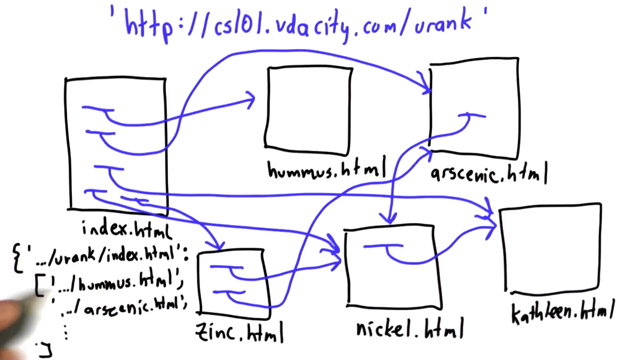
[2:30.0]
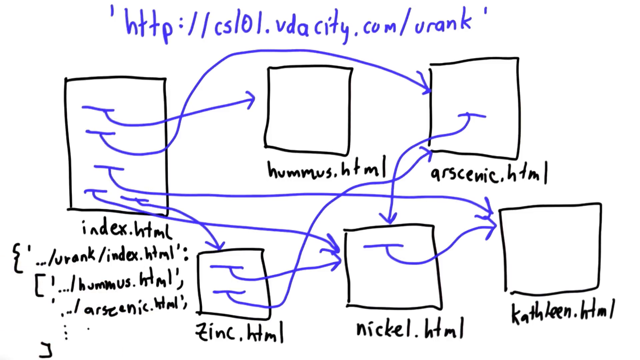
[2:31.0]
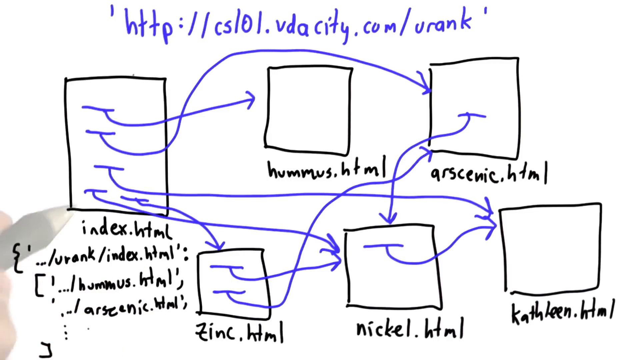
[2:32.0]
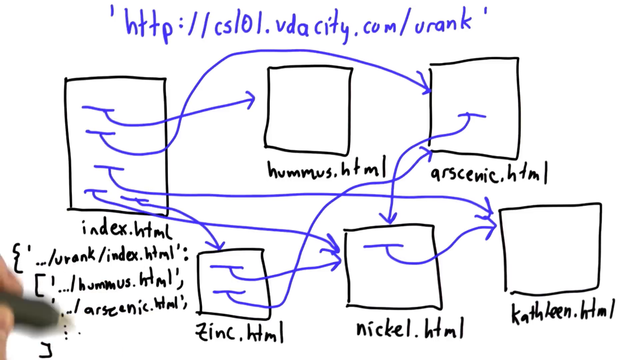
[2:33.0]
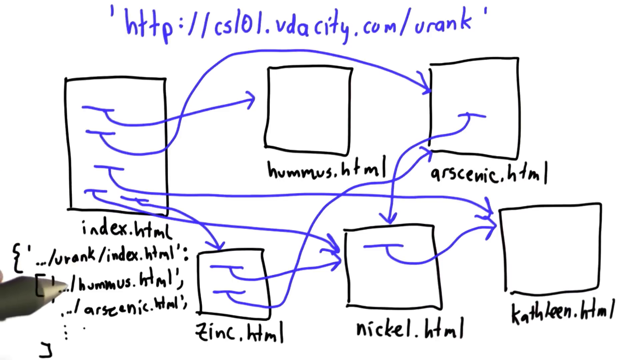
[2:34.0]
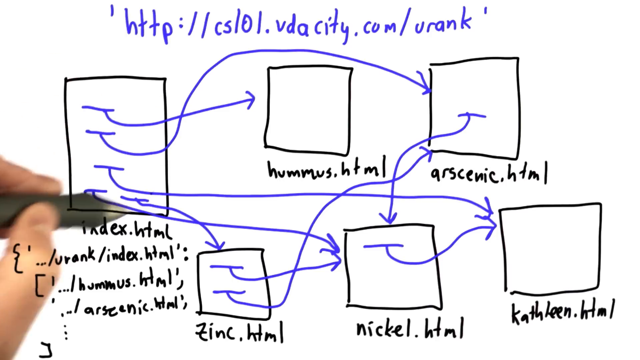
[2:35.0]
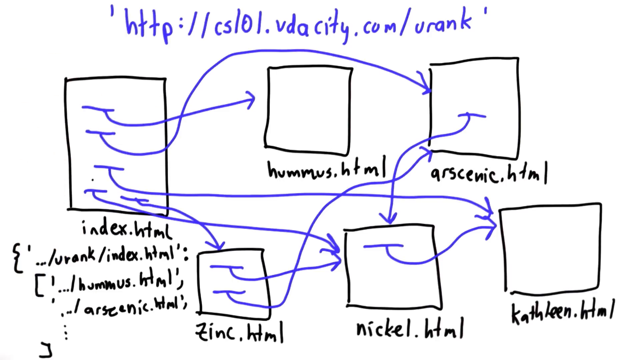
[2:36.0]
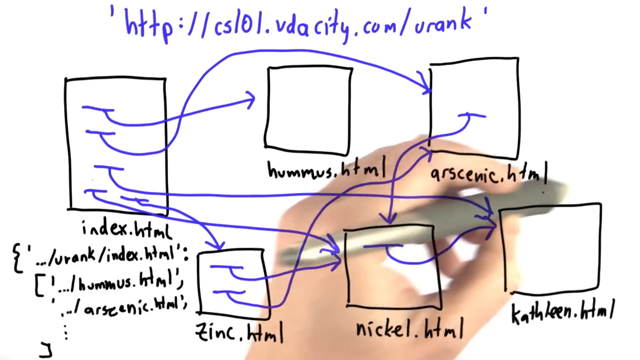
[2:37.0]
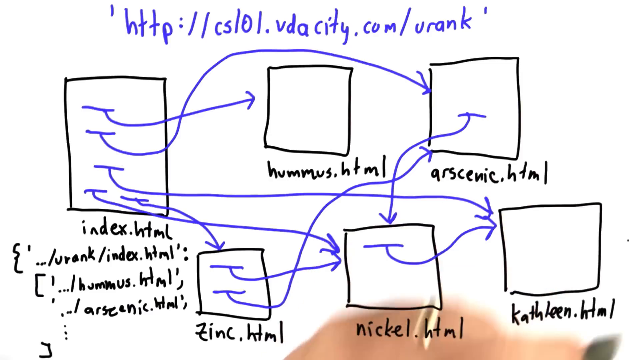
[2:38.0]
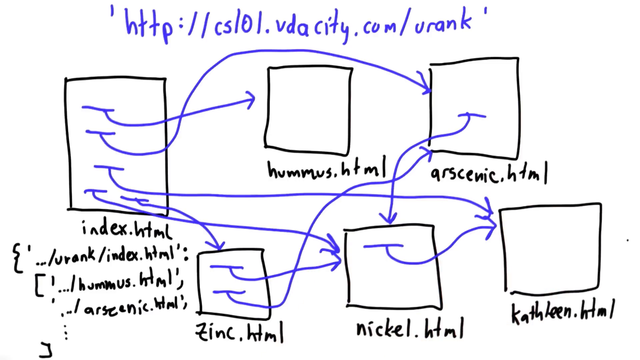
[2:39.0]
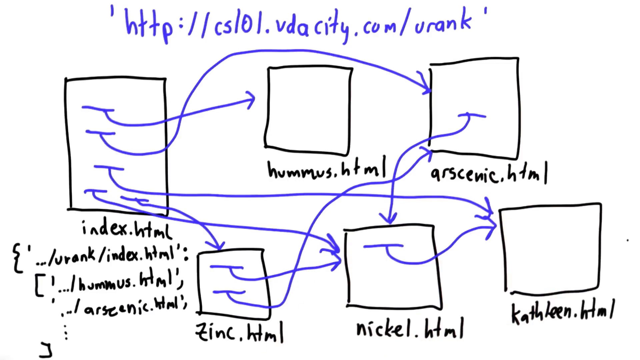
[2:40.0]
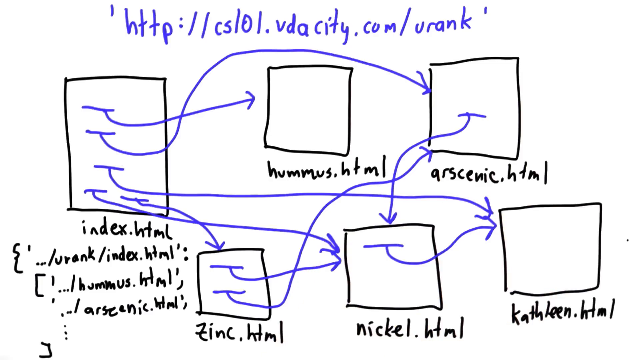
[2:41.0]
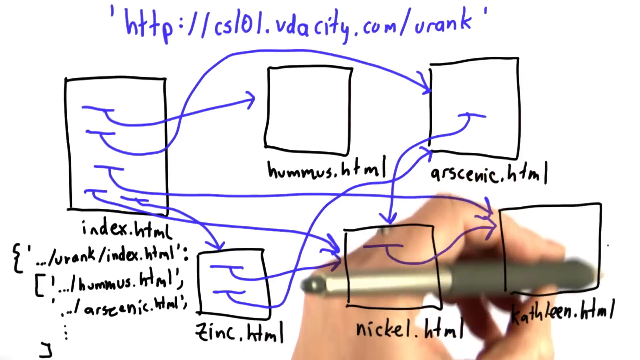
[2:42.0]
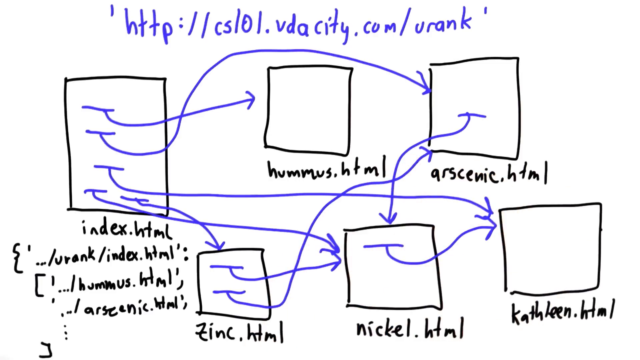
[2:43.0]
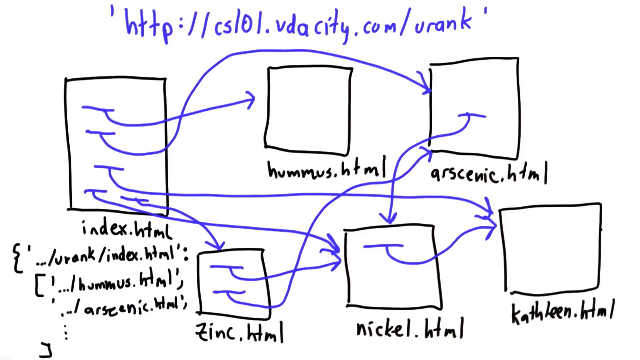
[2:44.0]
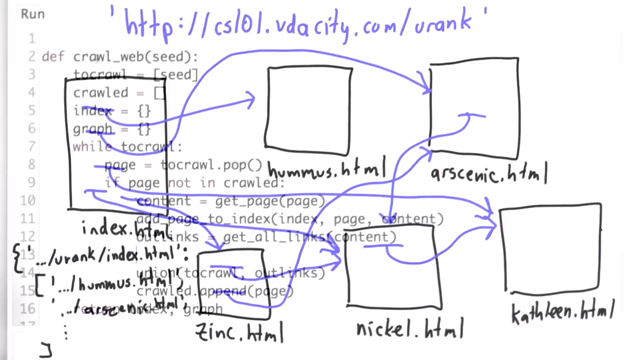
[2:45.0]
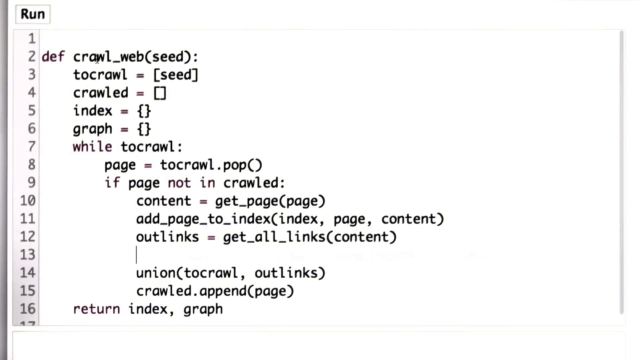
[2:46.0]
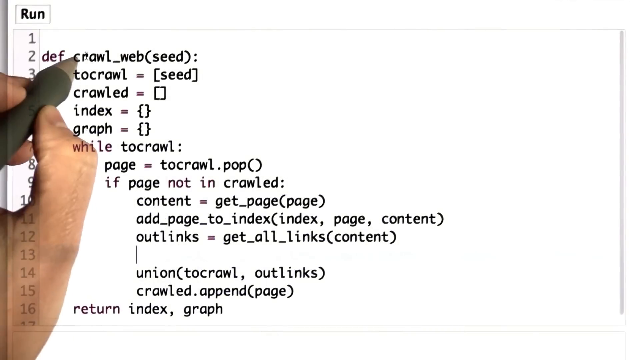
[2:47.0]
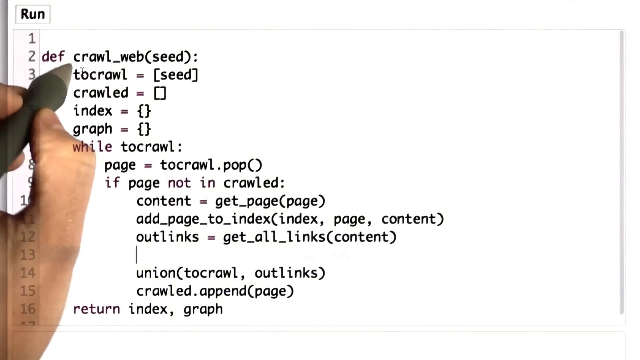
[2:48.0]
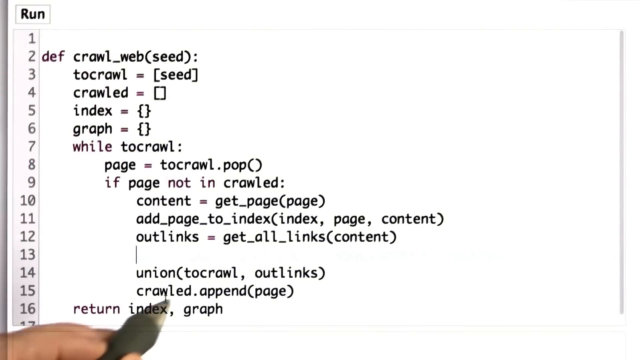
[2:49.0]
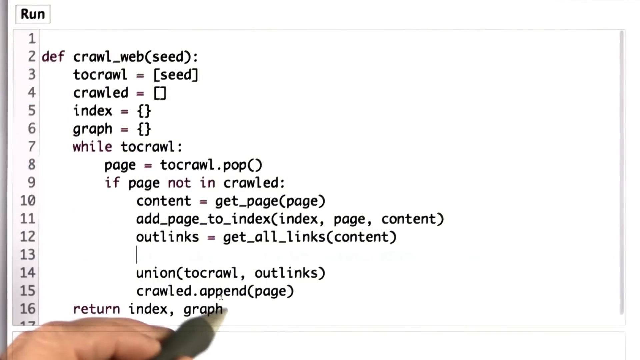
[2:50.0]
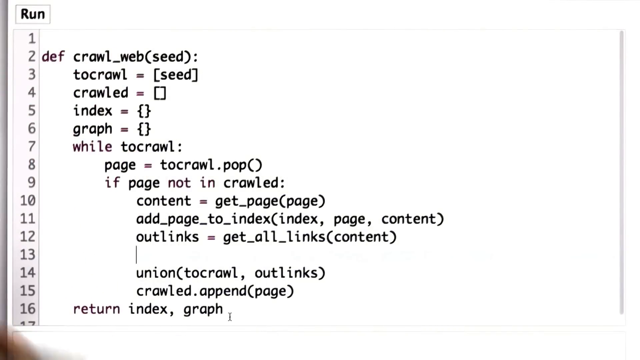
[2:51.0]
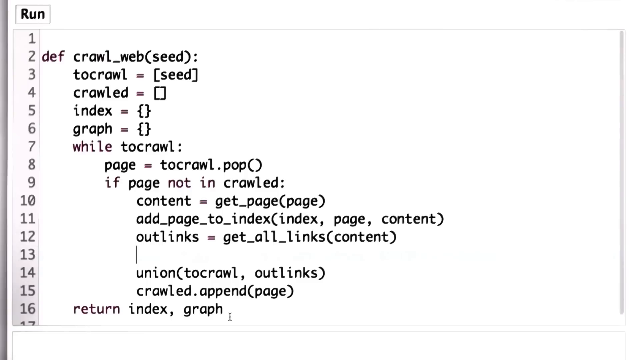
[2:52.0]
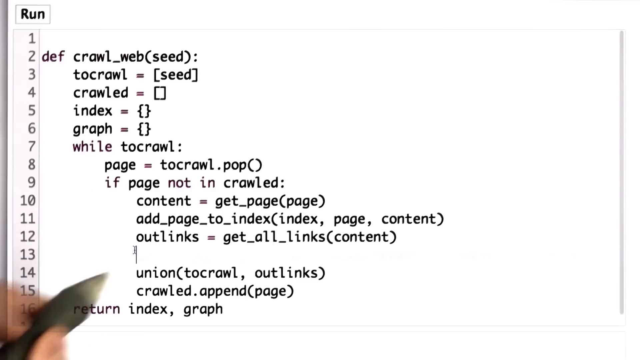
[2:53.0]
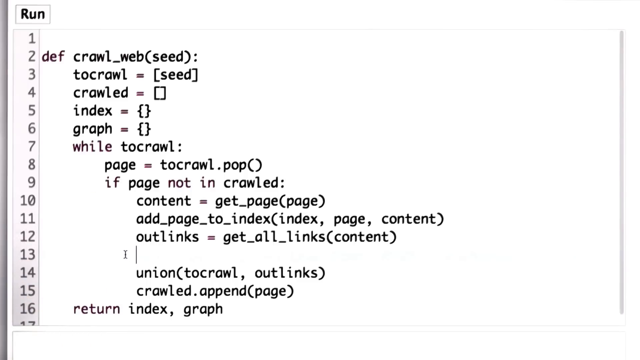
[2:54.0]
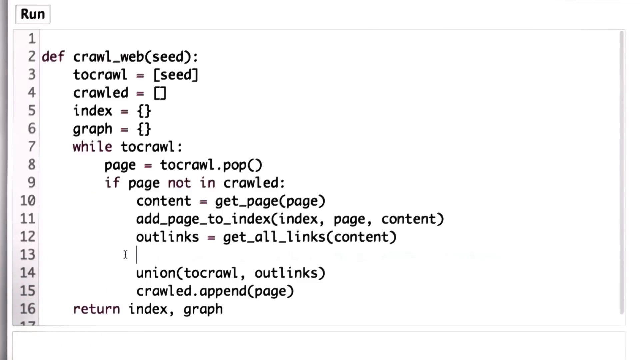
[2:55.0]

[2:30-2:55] The graph has now been created. Points are listed, including a point A that is left blank and a point B, with further steps referring to crawl web as a seed, pressing the index, adding another page to the index, and getting links to the content.